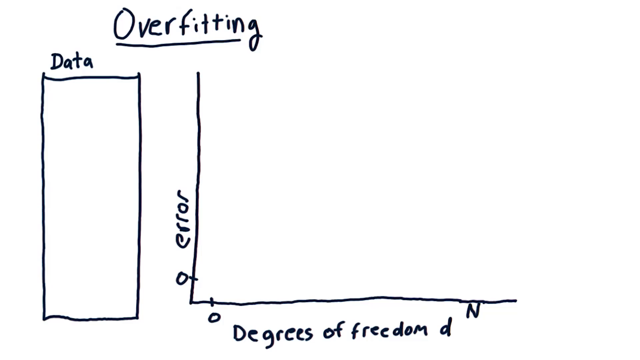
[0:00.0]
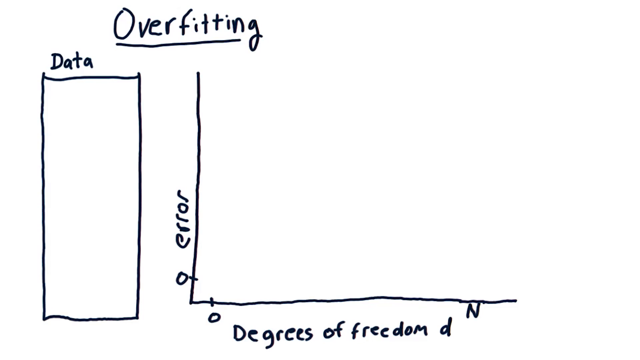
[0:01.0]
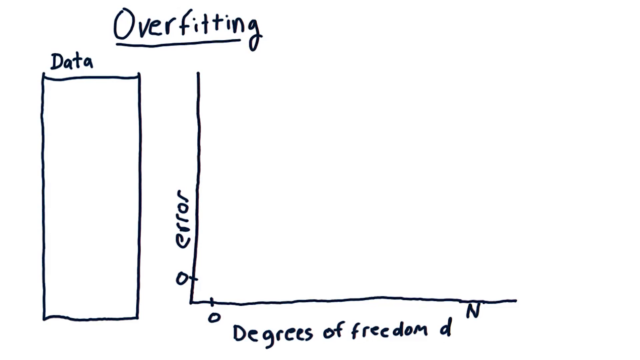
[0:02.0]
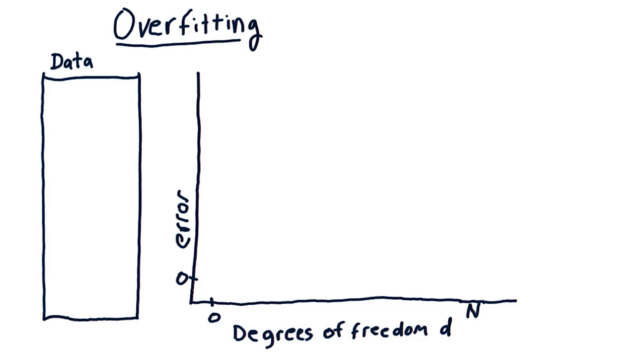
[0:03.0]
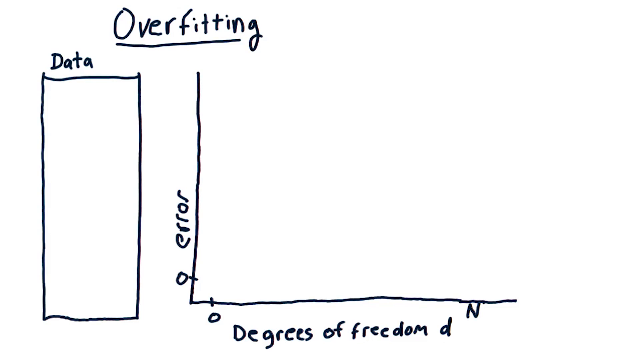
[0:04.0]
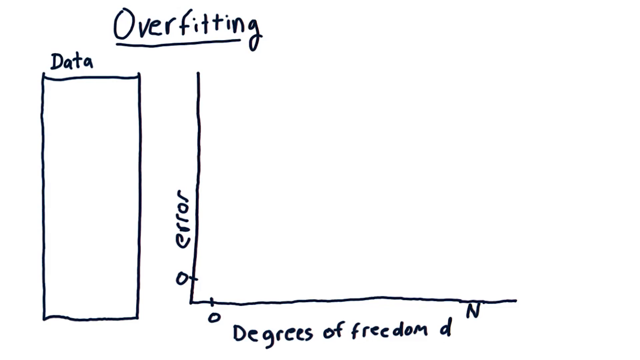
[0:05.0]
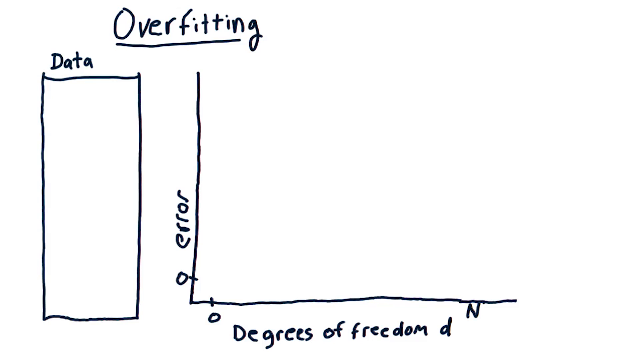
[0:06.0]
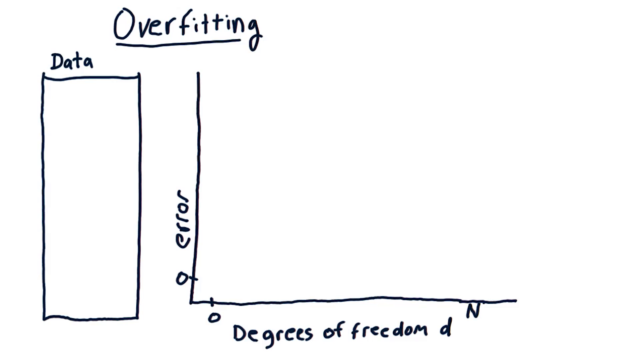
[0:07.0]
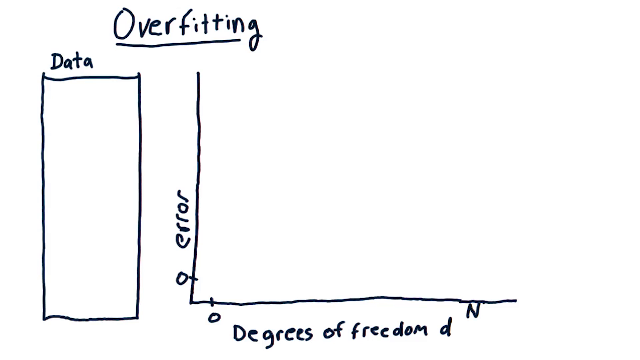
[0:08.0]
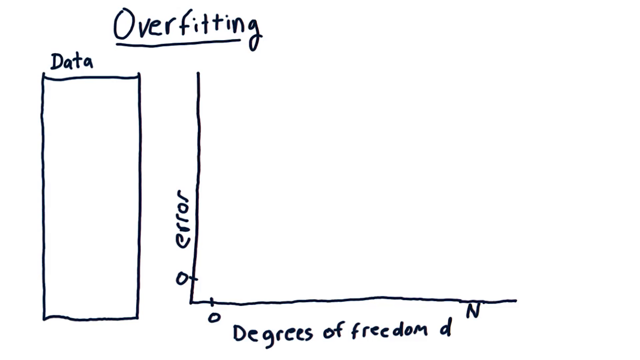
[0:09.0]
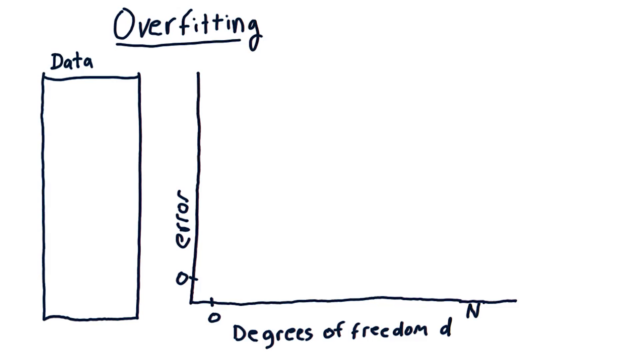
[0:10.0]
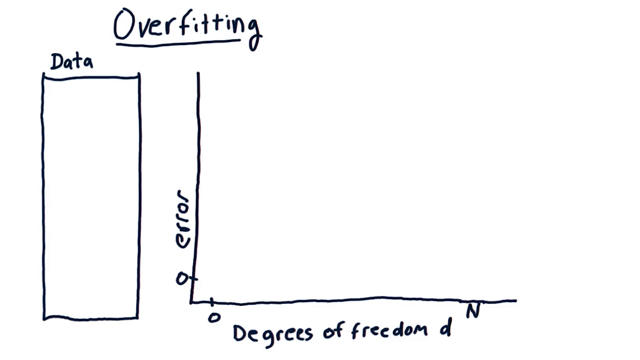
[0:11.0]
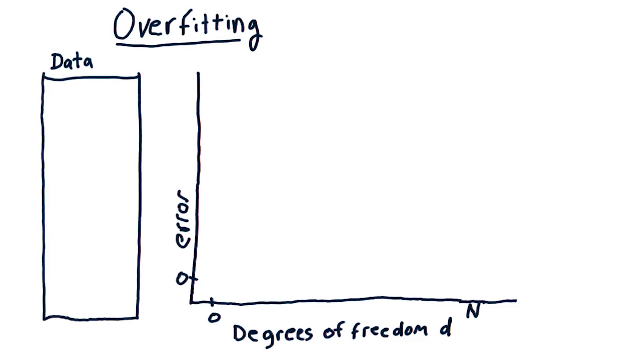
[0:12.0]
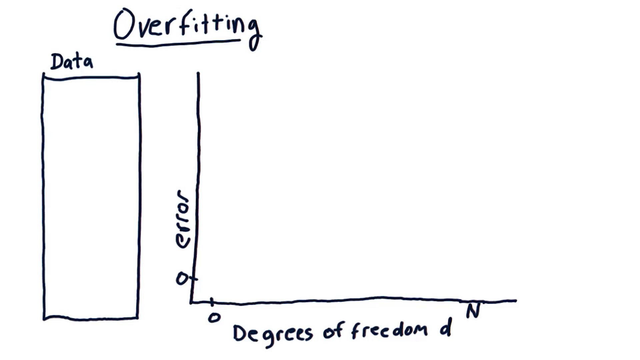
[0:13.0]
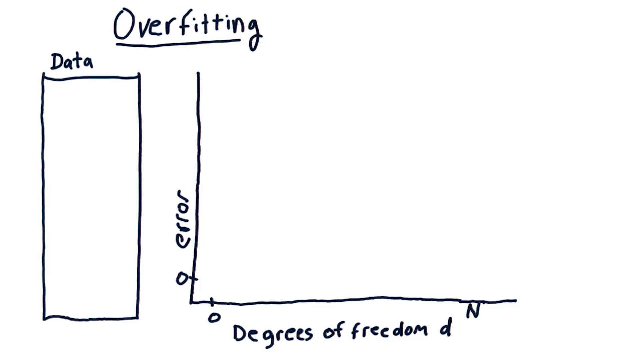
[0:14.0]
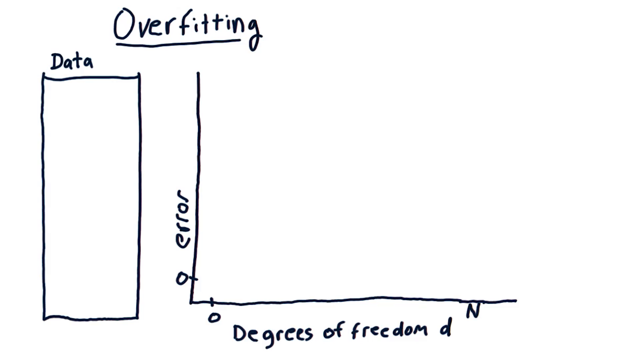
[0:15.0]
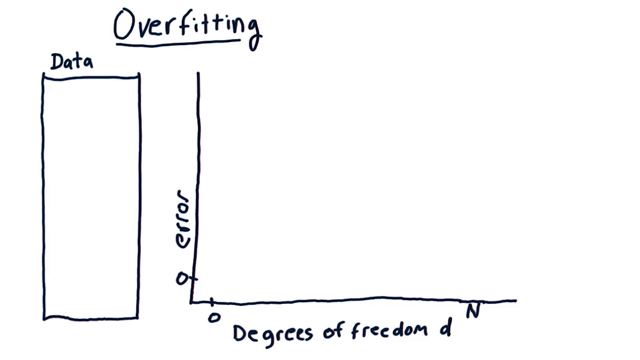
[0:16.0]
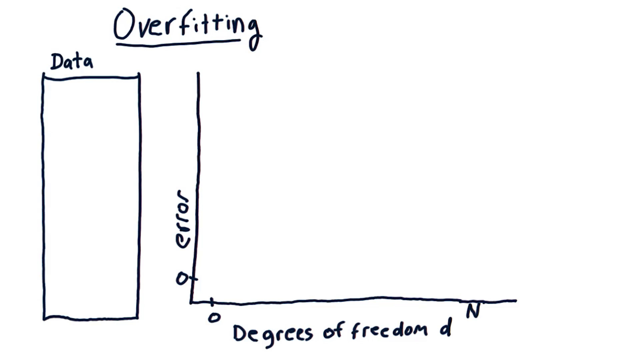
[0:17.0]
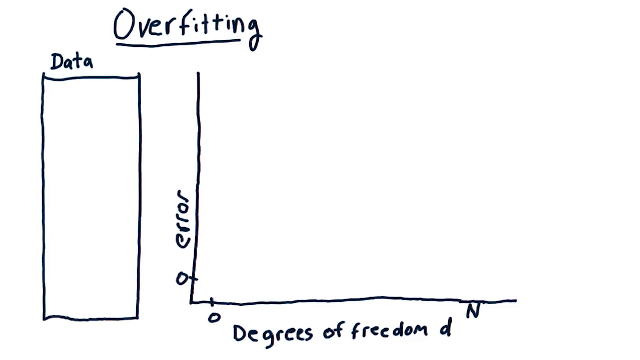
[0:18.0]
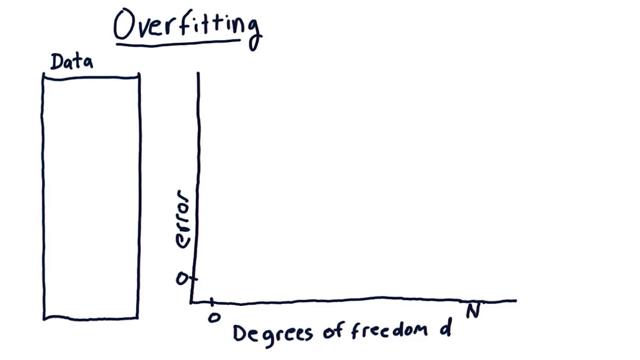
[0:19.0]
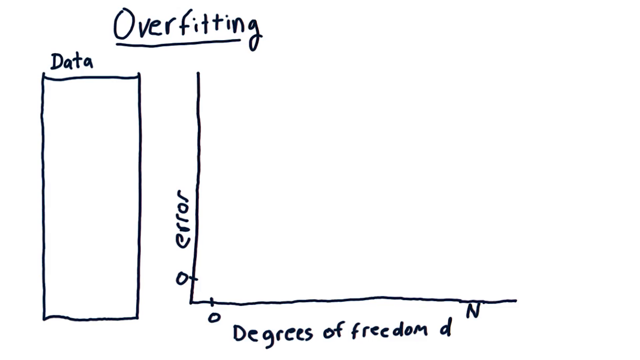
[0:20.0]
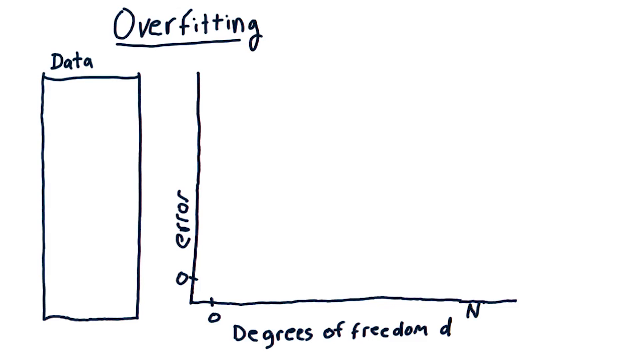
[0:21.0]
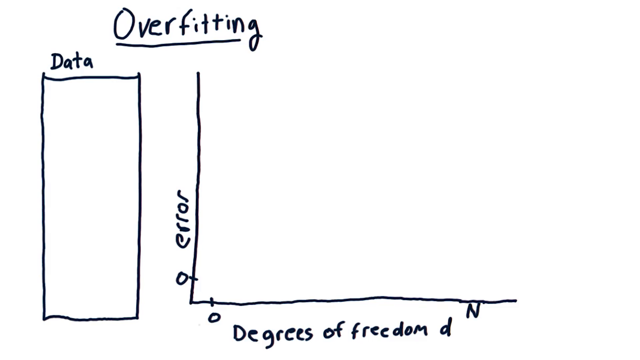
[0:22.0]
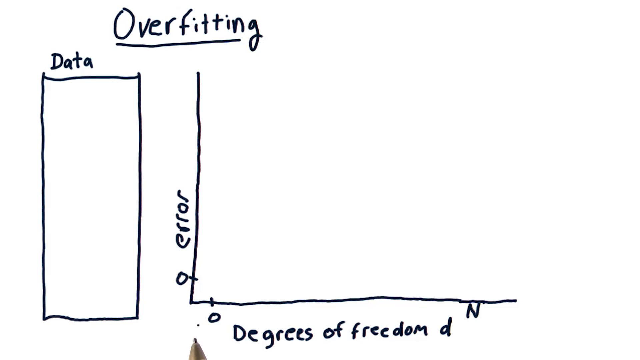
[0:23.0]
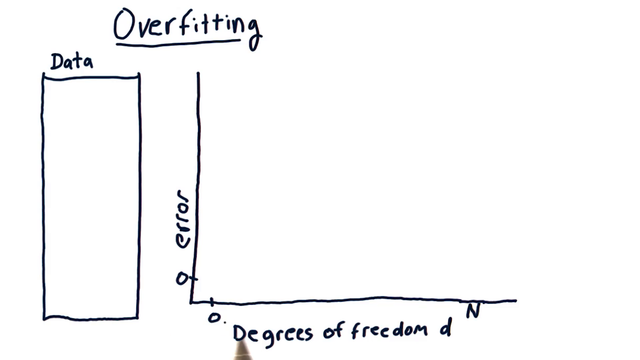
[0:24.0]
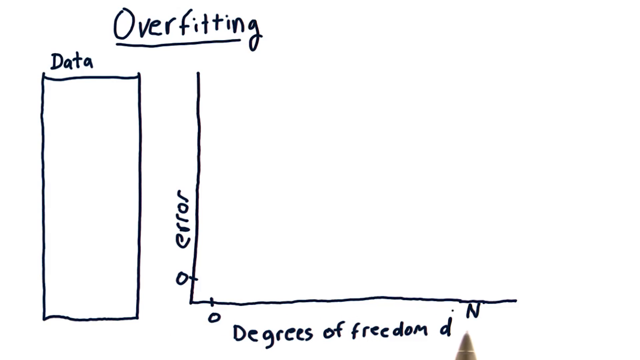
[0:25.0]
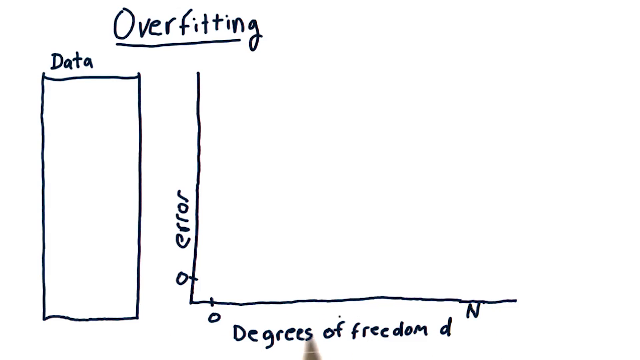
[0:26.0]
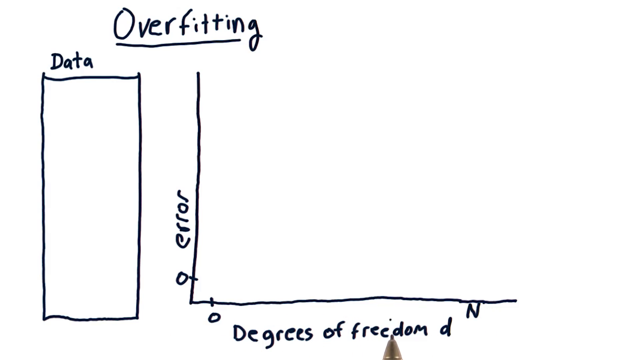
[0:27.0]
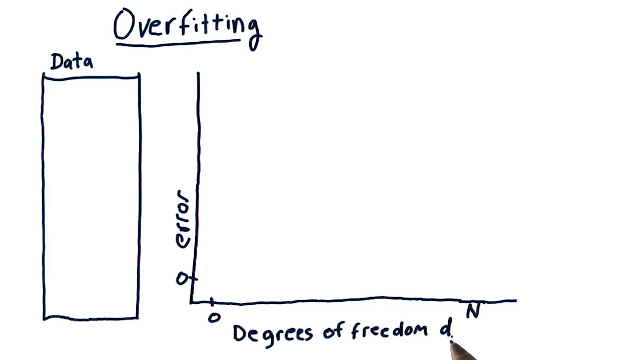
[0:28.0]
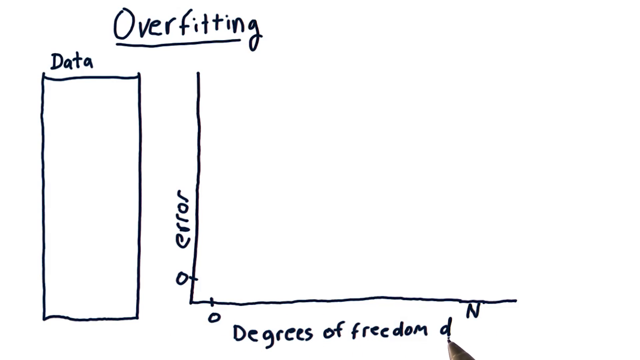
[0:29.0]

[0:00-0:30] The frame appears to show a hand-drawn graph; everything is hand-drawn. At the top, the title "overfitting" is underlined. On the left side is a vertical rectangle with "data" written on top of it. On the right side there appears to be a graph: the y-axis reads "error" and has 0 at the bottom left as its lowest value, with no other values on the axis. The x-axis is labeled "degrees of freedom, D" and runs from 0 to N on the right side. The video stays paused on the data rectangle and this overfitting graph for around 20 seconds. Then a pen tip appears from the bottom of the frame and seems to slide along the x-axis from 0 to N, left to right, then back and forth from left to right again. The pen then circles the D in the x-axis title "degrees of freedom, D", pointing it out, going around it clockwise about five times.